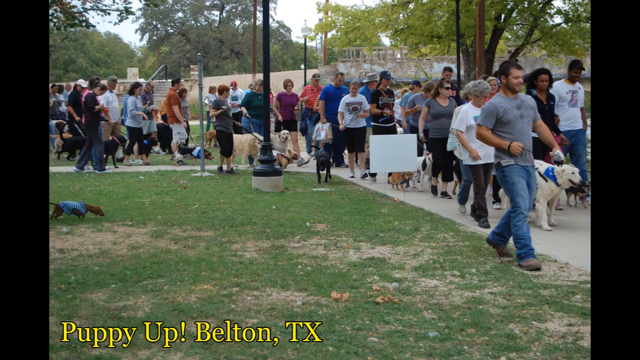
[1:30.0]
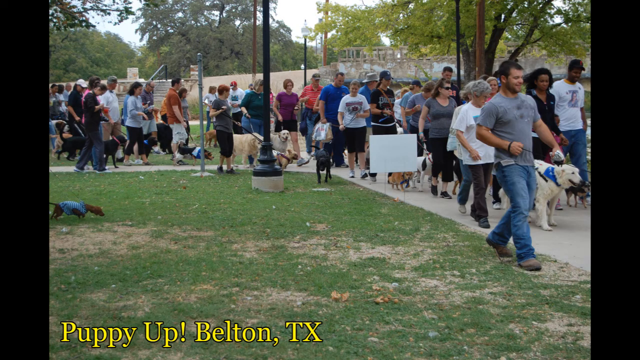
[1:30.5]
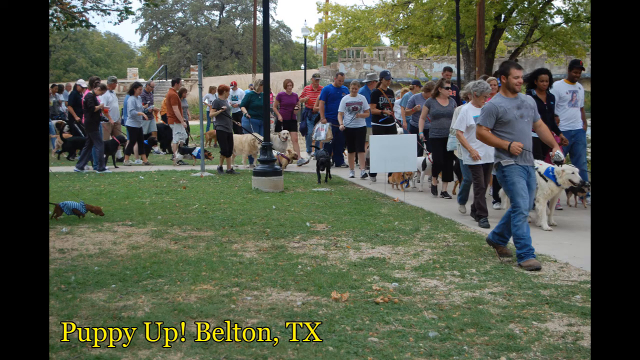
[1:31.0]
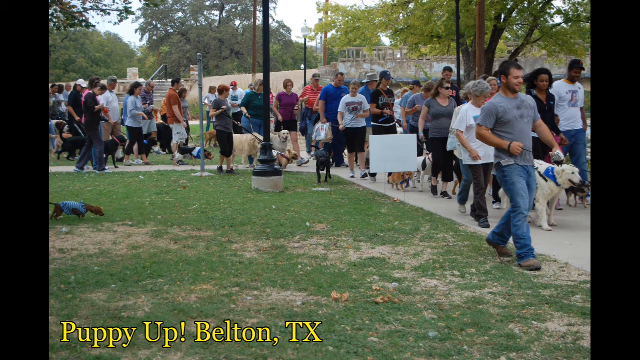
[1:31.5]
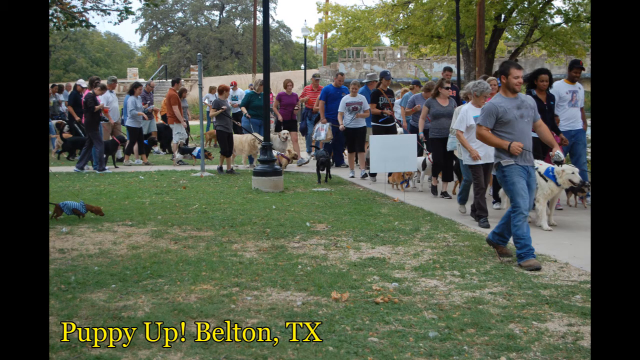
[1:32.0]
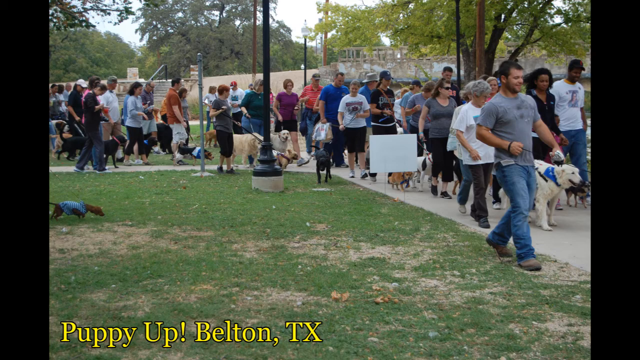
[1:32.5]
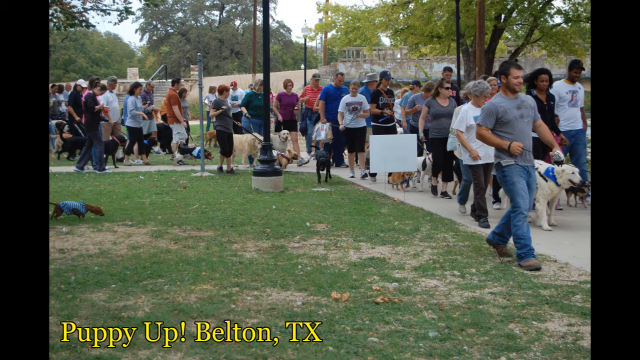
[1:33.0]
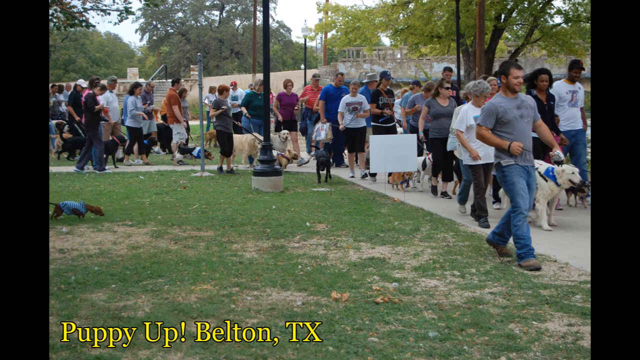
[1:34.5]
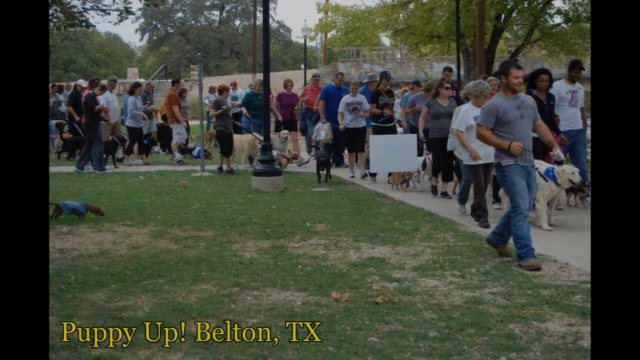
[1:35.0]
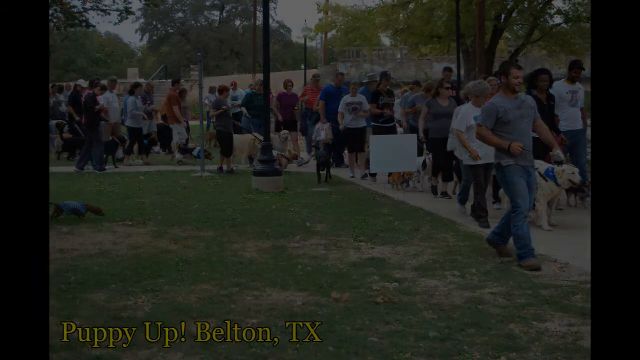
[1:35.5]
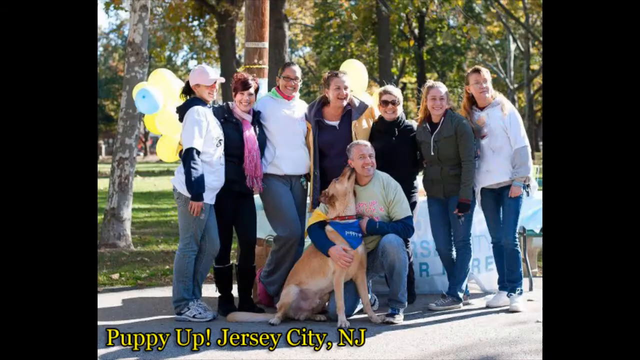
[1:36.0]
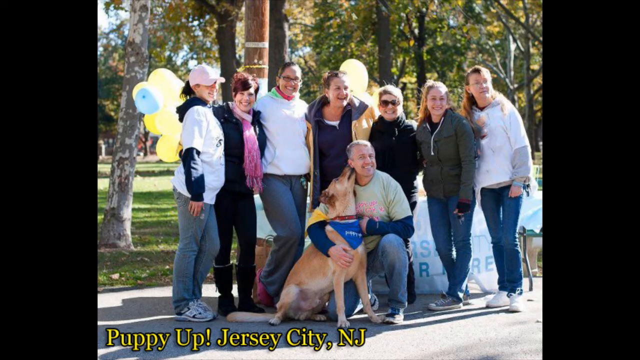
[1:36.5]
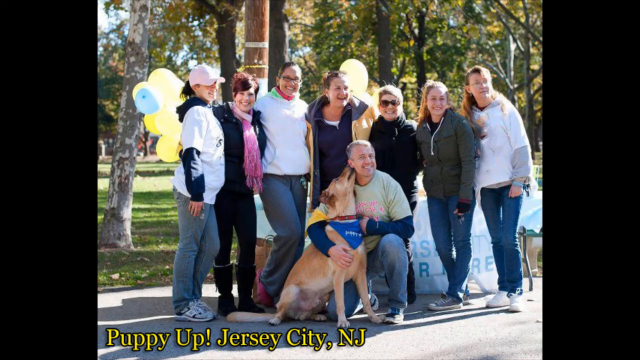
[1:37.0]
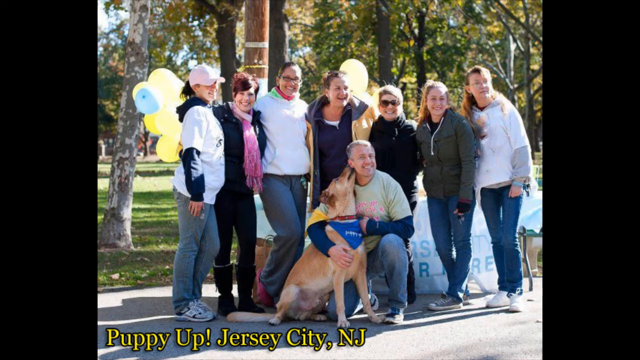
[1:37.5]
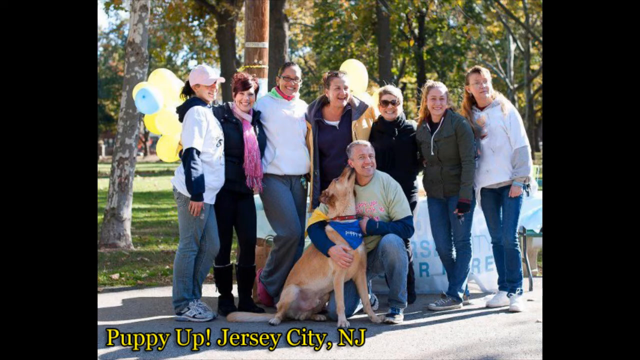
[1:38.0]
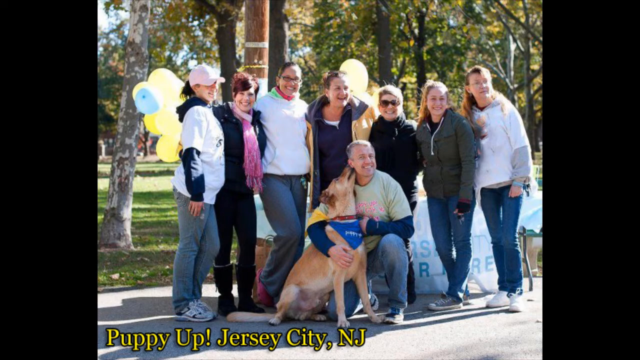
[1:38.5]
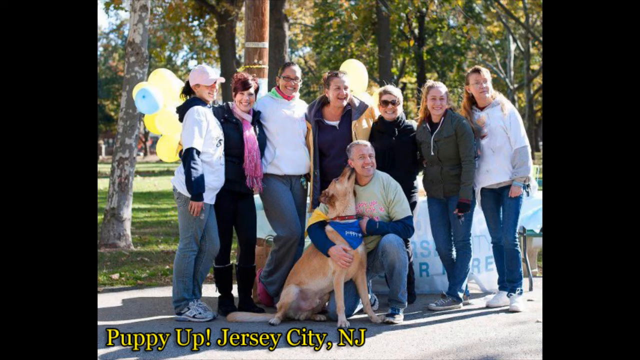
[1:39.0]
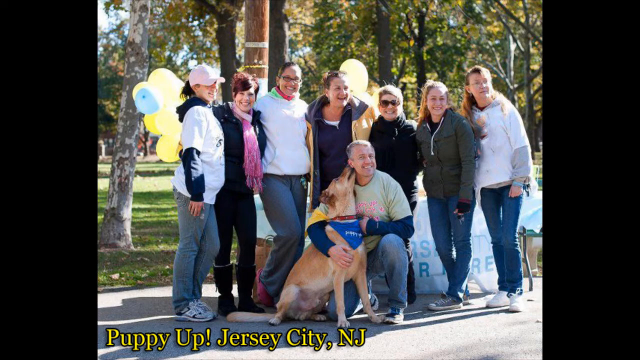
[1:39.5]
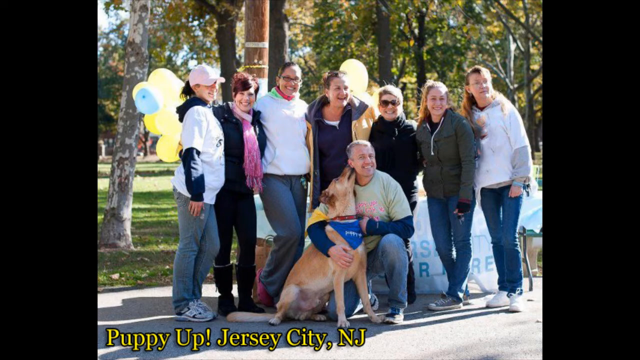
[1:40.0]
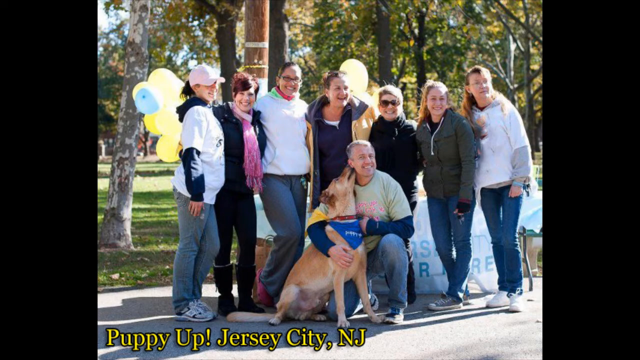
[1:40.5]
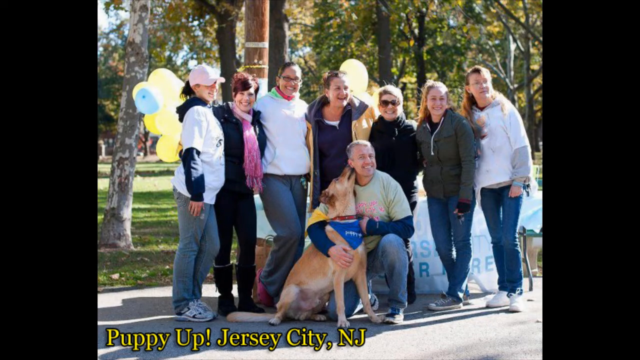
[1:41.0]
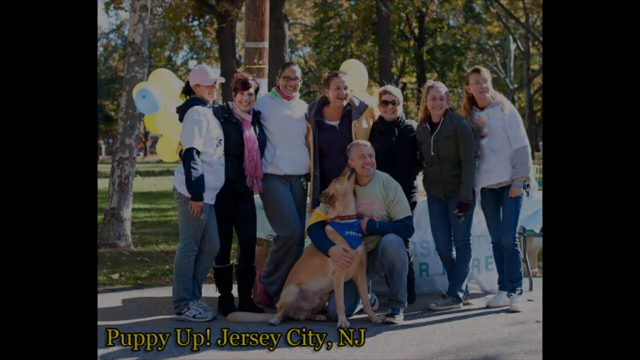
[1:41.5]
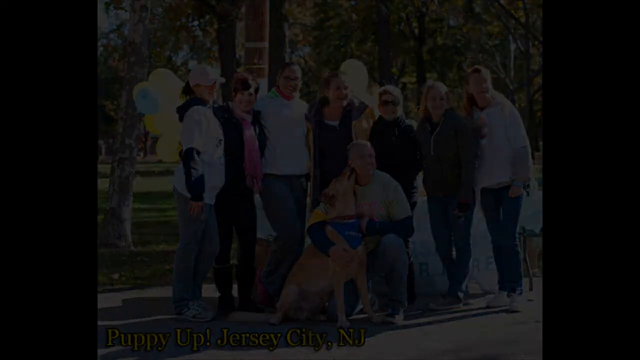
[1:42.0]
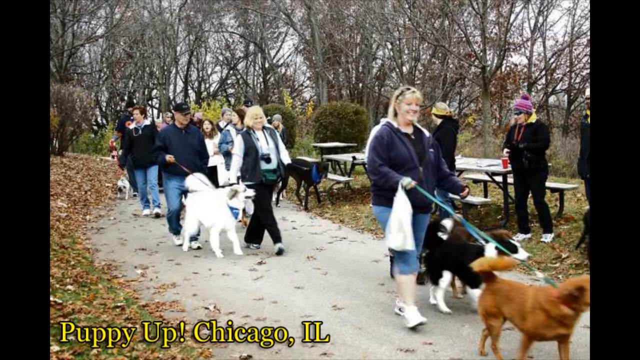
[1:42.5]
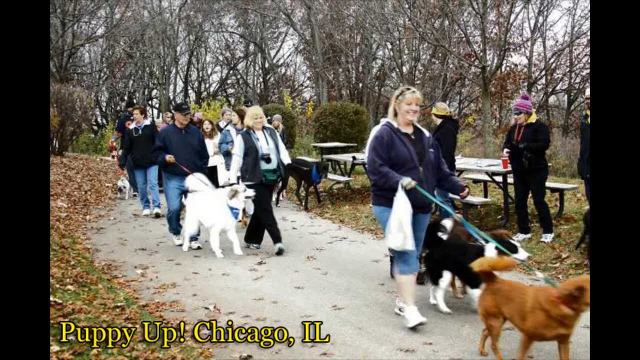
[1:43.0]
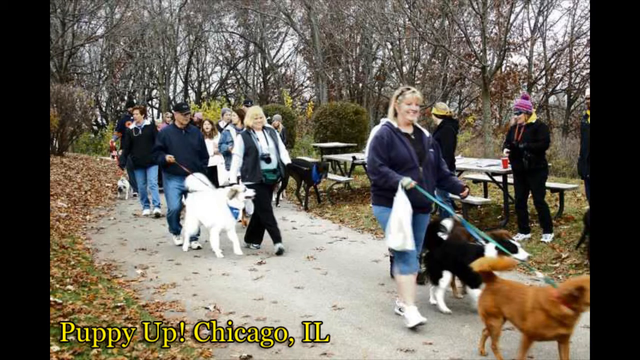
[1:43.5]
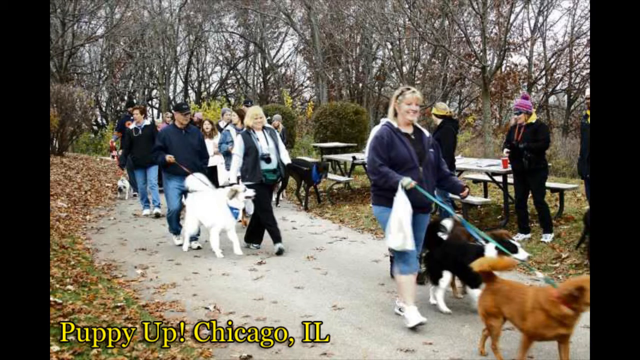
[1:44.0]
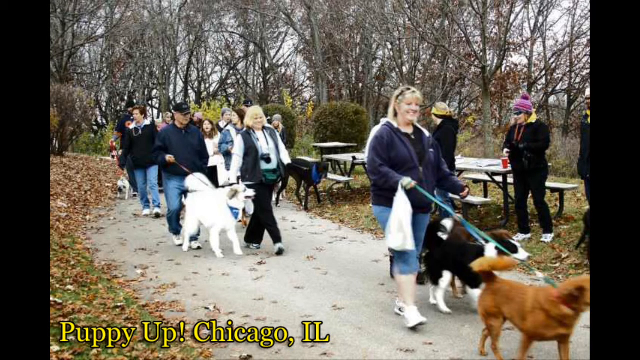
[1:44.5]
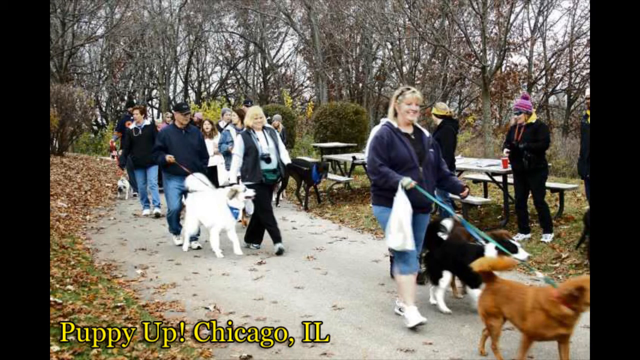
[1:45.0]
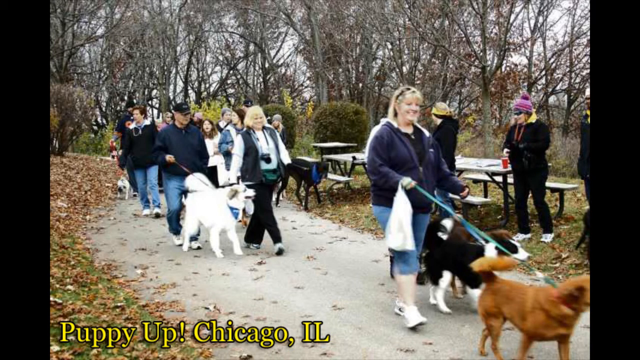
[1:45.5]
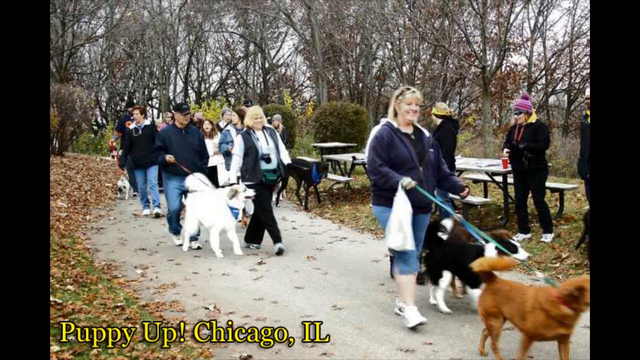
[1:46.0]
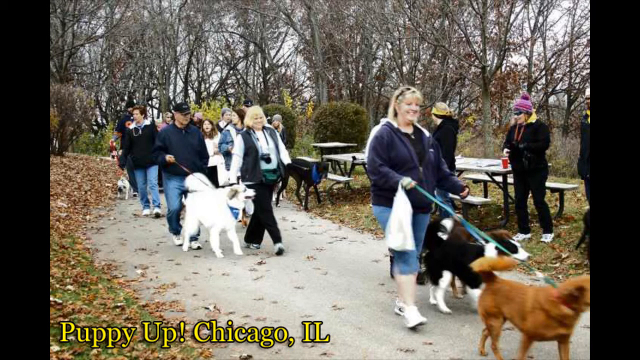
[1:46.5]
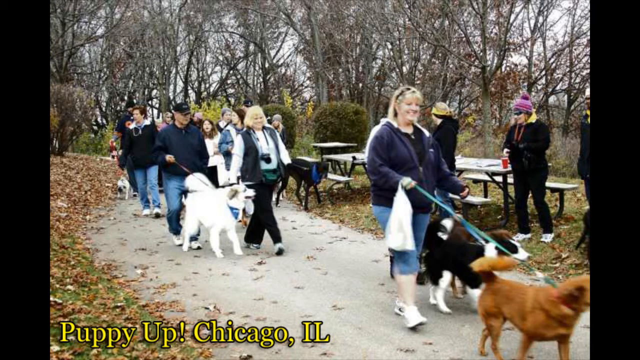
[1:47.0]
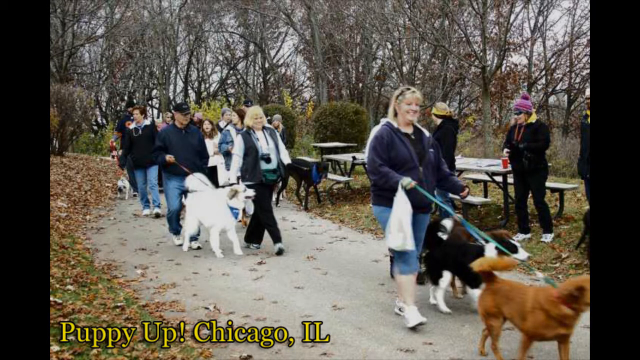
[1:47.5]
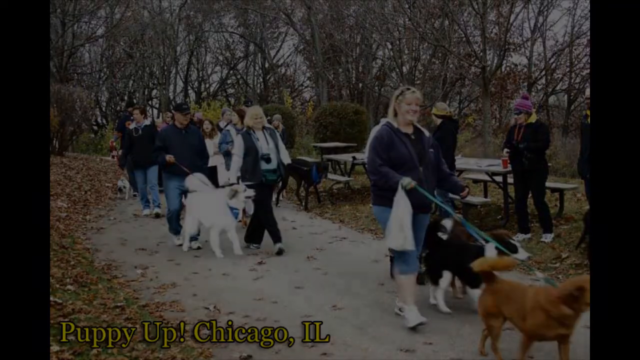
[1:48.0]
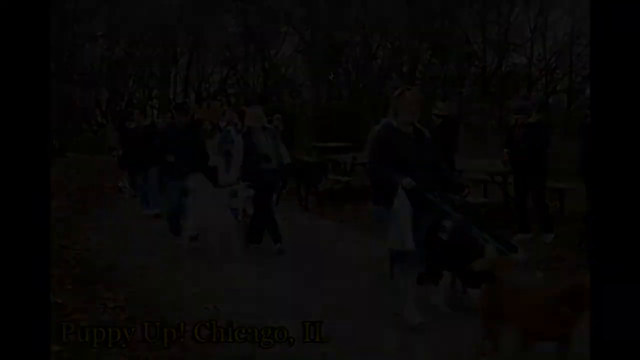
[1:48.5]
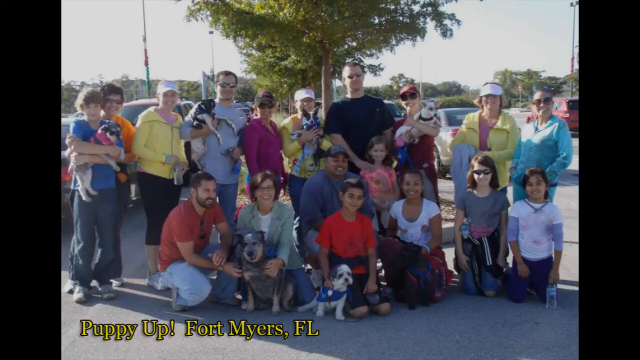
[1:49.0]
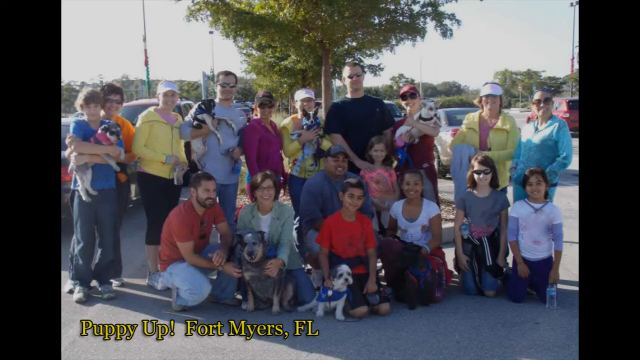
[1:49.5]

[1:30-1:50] Text reads "cancer touches everyone" and "2 million dogs". People talk about their experiences with their dogs, and the statement "cancer is the greatest global killer" appears. More people with dogs are shown, with "cancer touches everyone" and "2 million dogs". The director of the program, Ginger Morgan, executive director of 2 million dogs, has blonde hair and wears a black top.